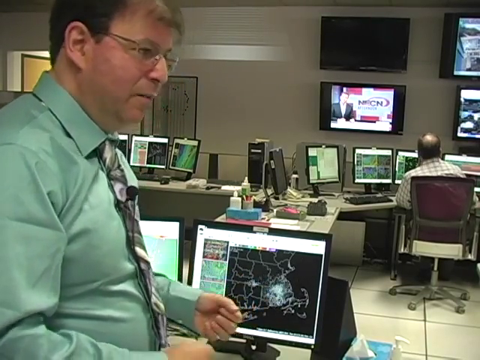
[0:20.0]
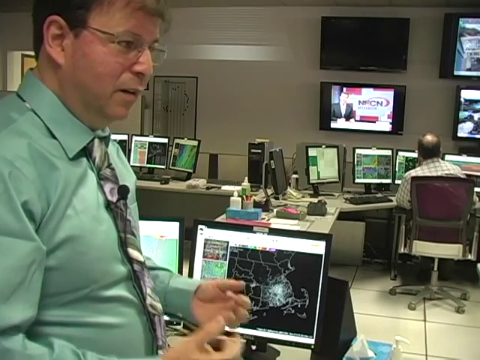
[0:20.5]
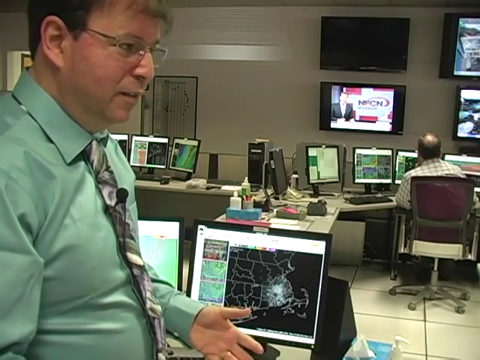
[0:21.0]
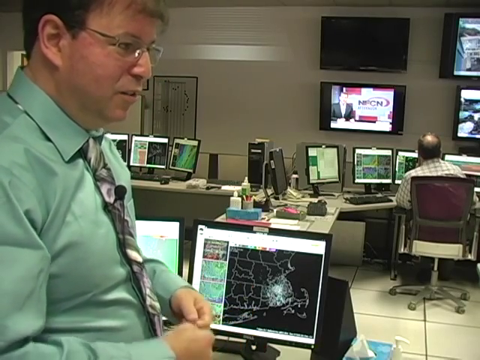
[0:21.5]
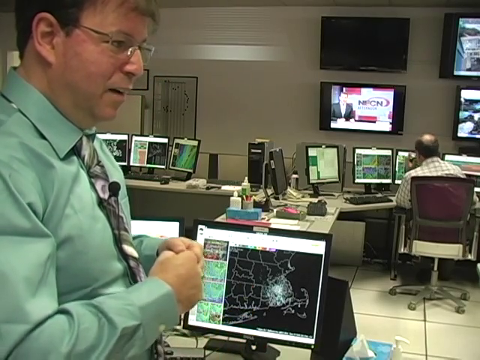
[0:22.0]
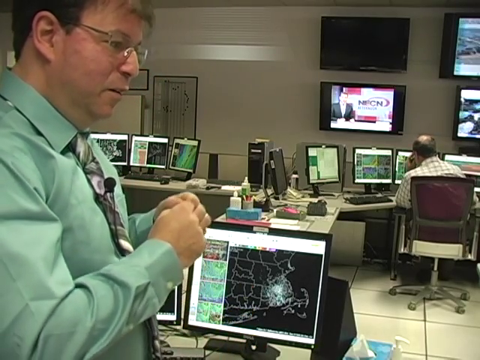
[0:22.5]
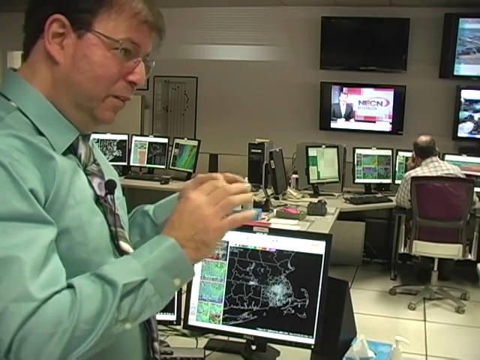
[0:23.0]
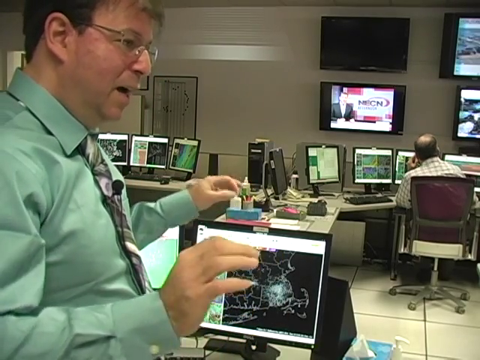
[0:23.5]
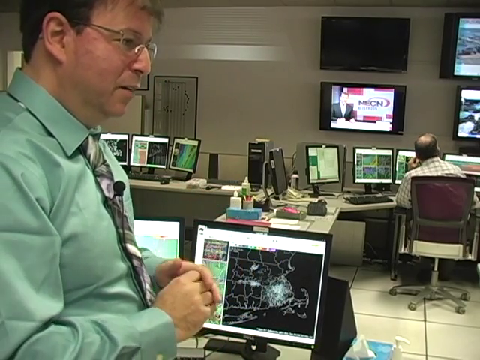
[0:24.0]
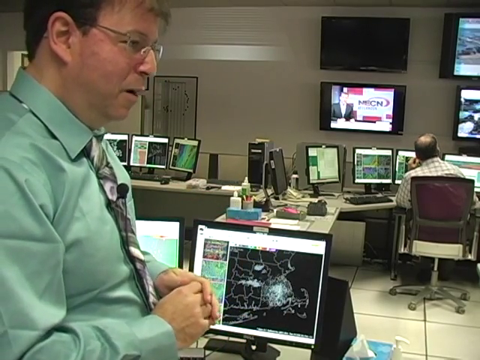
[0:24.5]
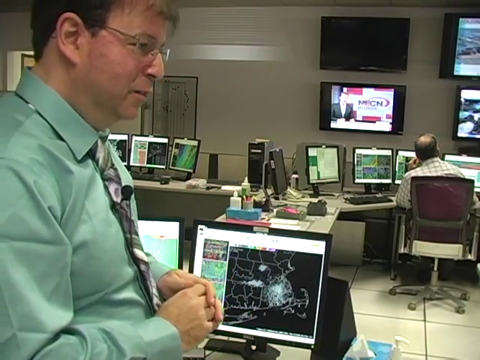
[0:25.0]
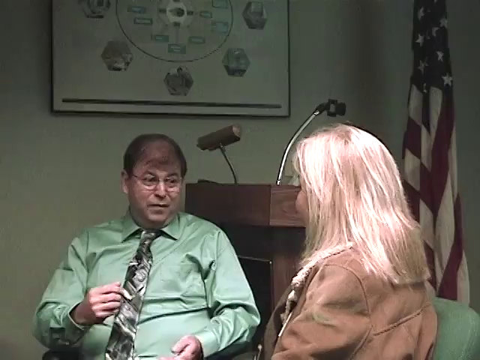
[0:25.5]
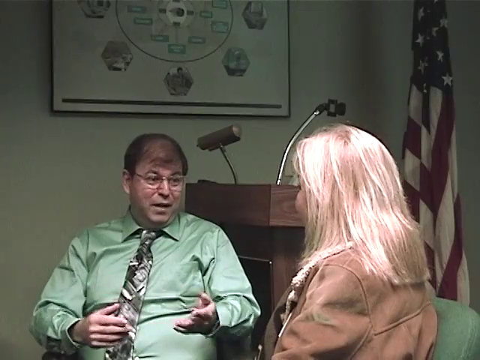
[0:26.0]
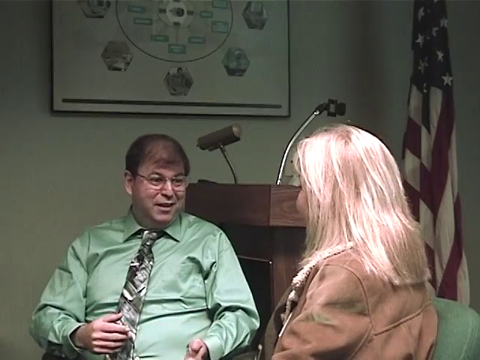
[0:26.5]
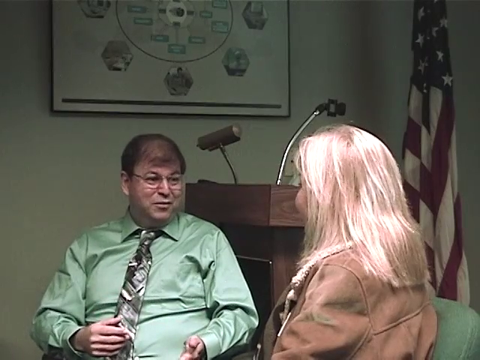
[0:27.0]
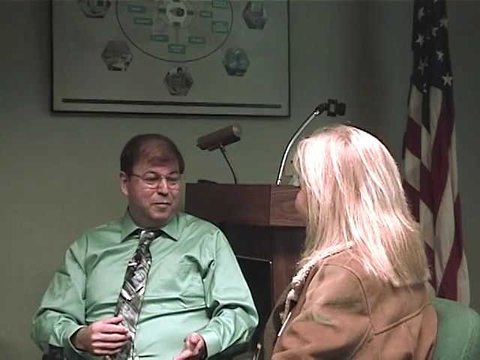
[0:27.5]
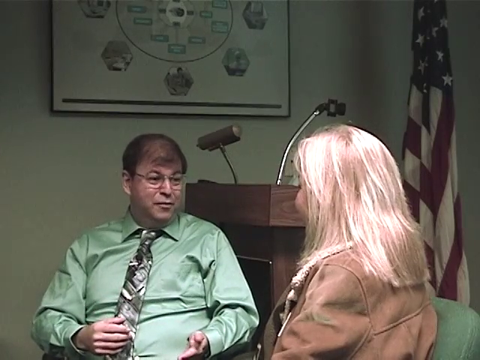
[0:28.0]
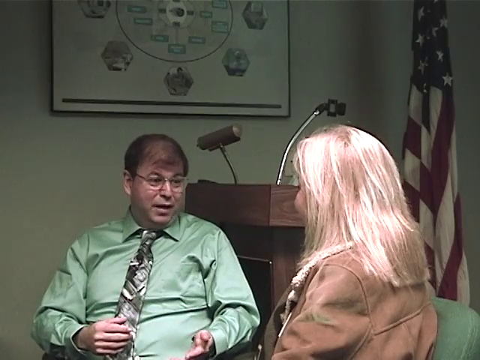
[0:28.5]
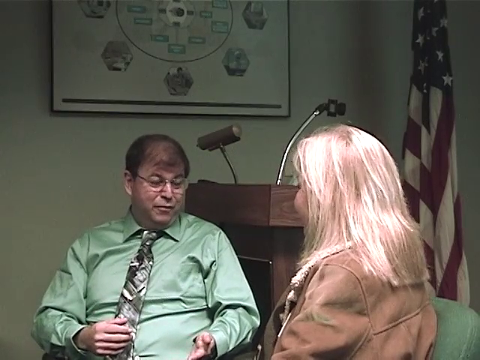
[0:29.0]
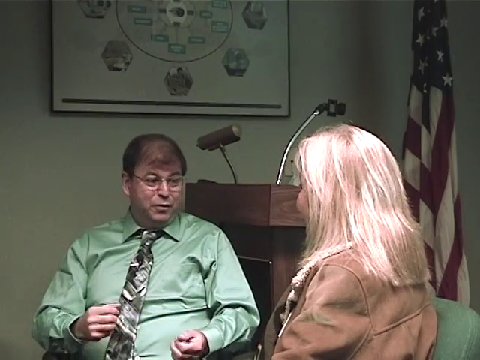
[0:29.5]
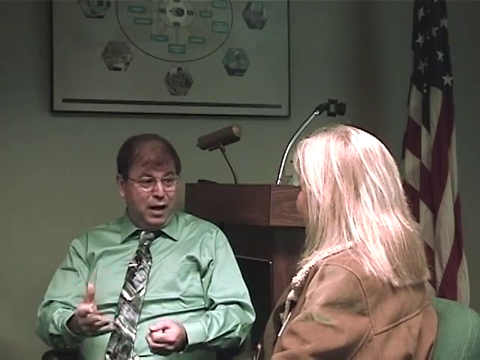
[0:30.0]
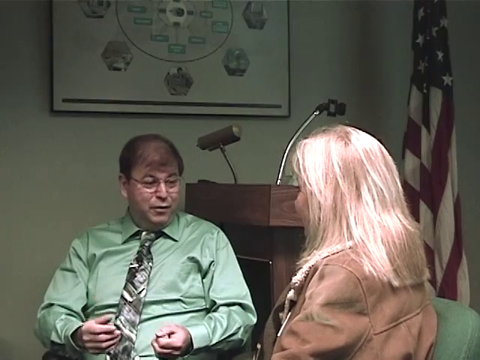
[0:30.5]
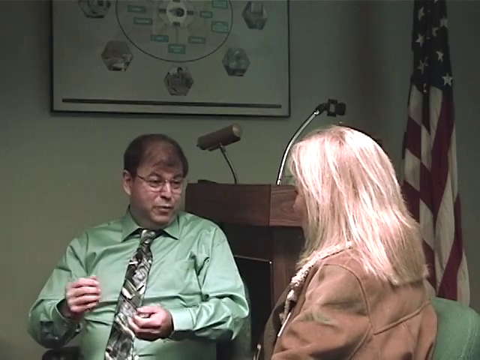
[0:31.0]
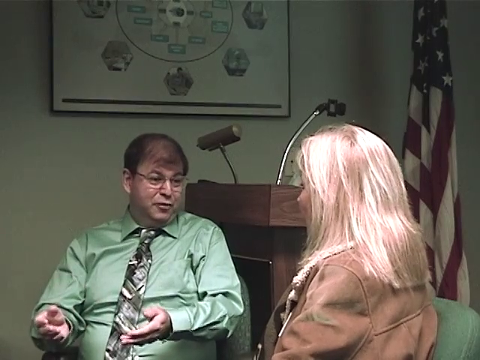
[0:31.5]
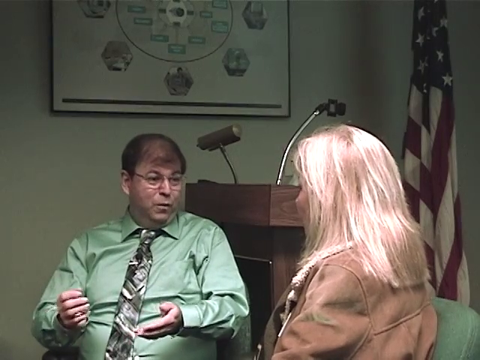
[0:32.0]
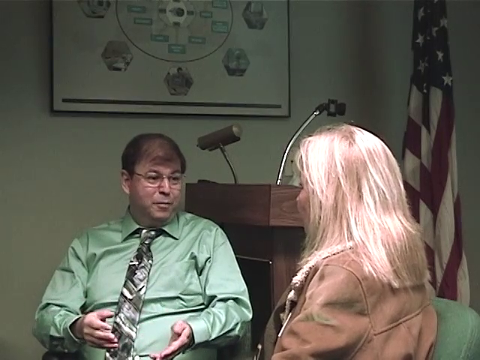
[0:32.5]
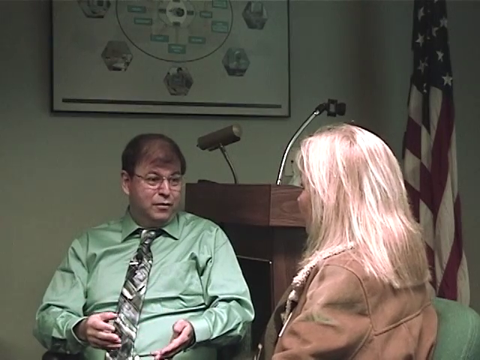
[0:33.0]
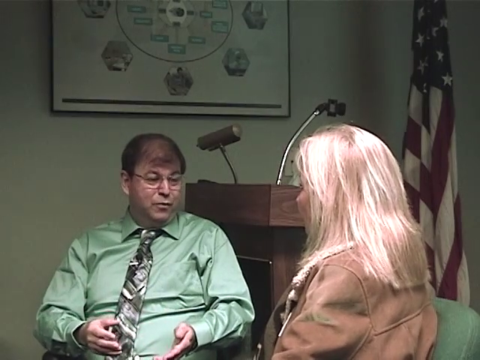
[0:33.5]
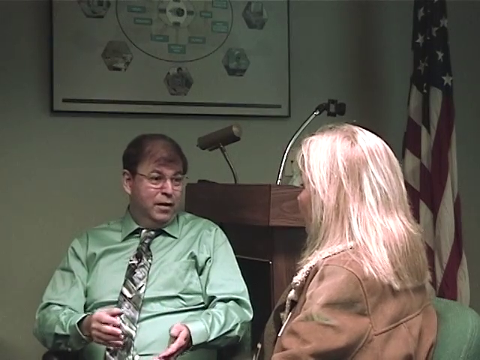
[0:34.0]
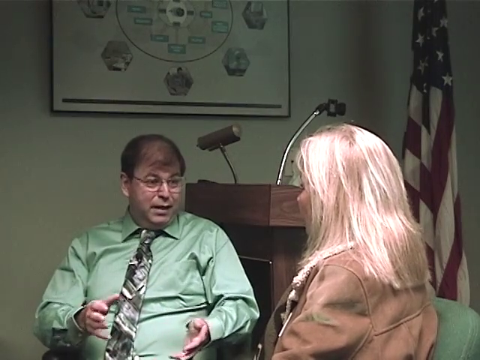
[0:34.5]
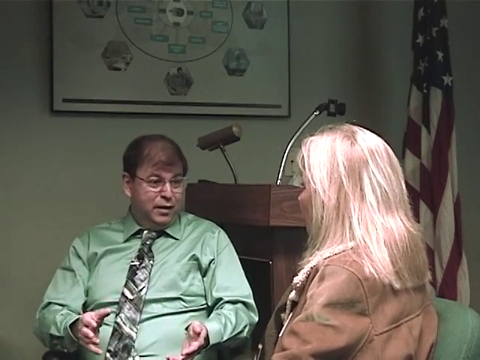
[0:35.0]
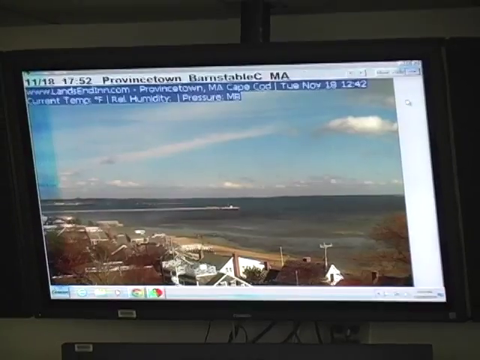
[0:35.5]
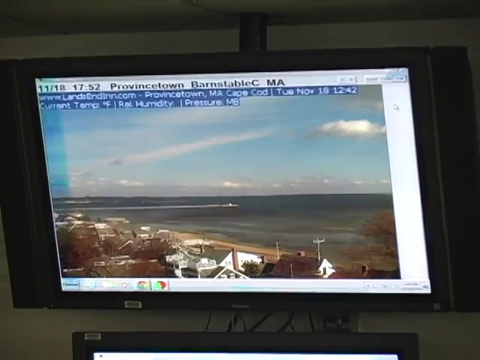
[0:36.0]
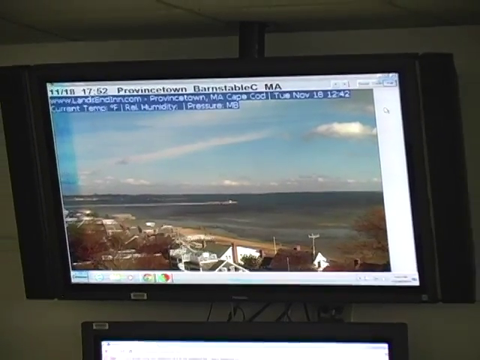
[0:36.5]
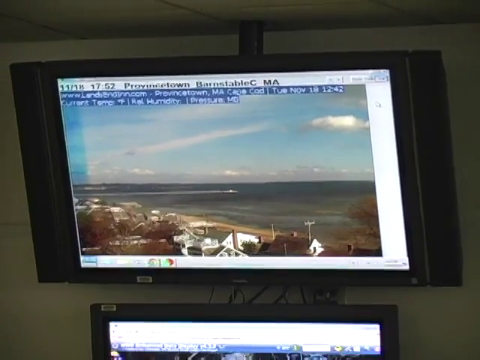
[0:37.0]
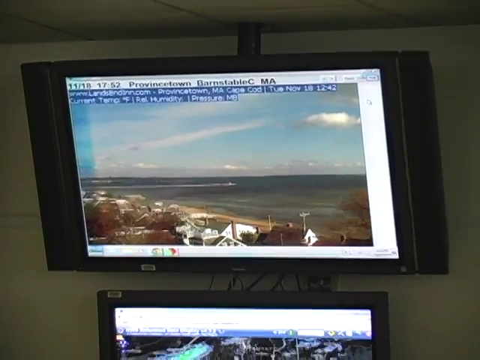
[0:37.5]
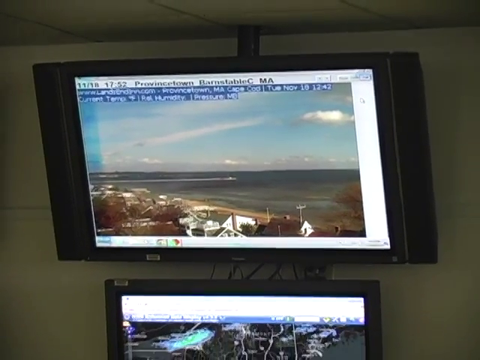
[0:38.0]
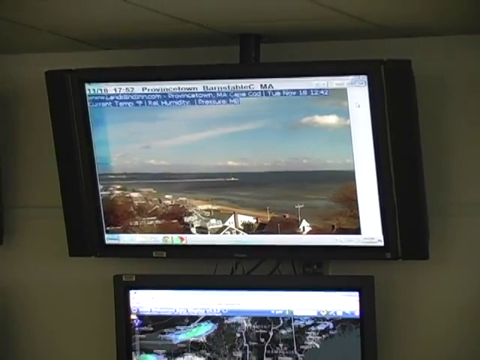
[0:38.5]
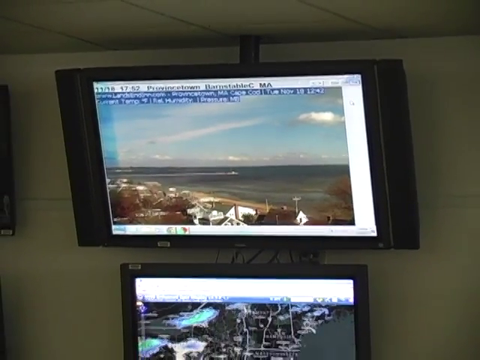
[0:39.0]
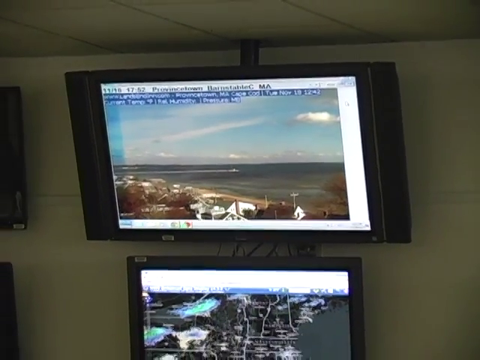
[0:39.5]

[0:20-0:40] A person who looks to be working in an office with computers and screens is shown, while the person behind him watches those computers. The man in the green shirt and tie is talking. The video switches to a man and a woman communicating in what looks like some sort of office, with a desk in the background, some lights, an American flag and another flag. The woman agrees with what the man is saying while the man uses his arms. A screen then shows a map of the ocean, with two screens of the ocean map. The video returns to the man in the office with the computers, who shows the screens at his sides while talking and using his arms.